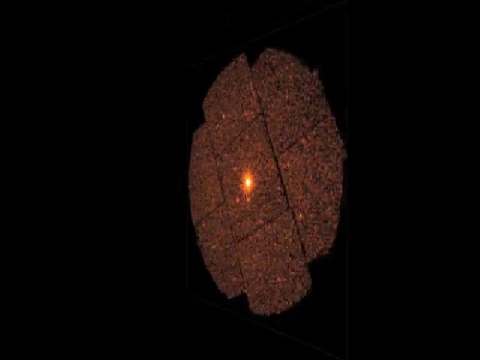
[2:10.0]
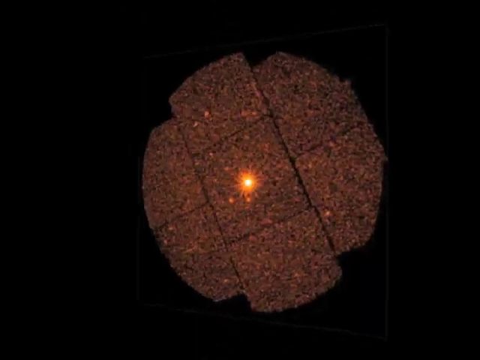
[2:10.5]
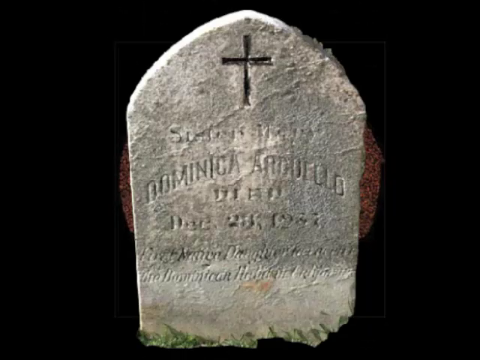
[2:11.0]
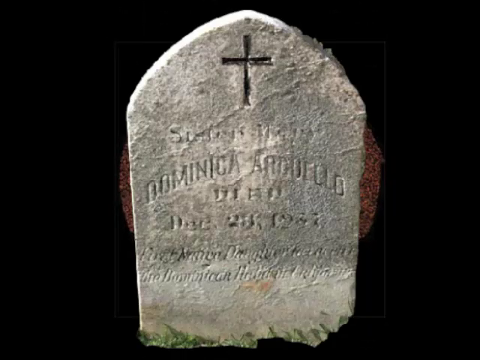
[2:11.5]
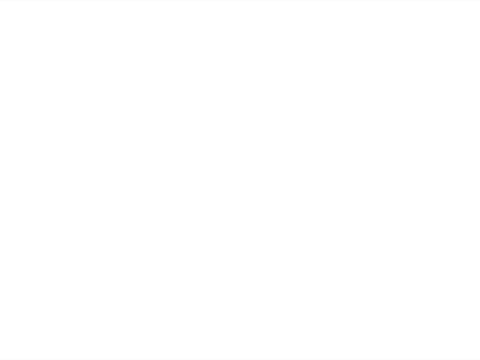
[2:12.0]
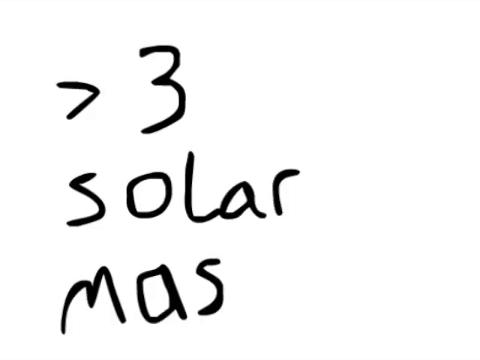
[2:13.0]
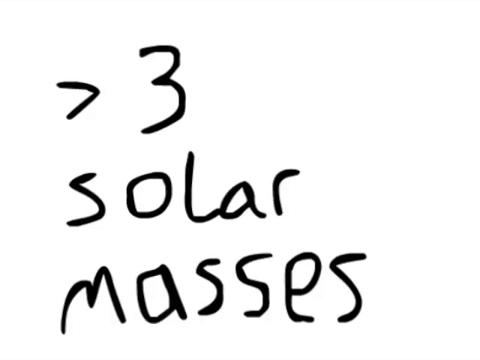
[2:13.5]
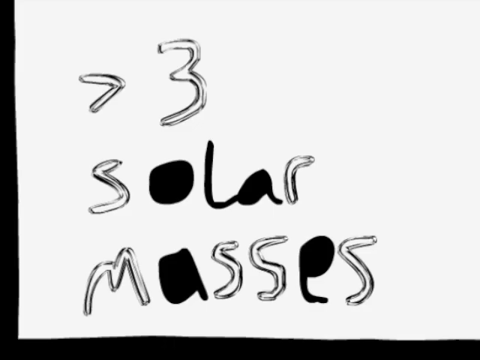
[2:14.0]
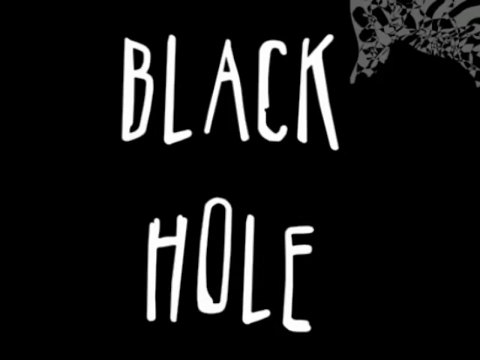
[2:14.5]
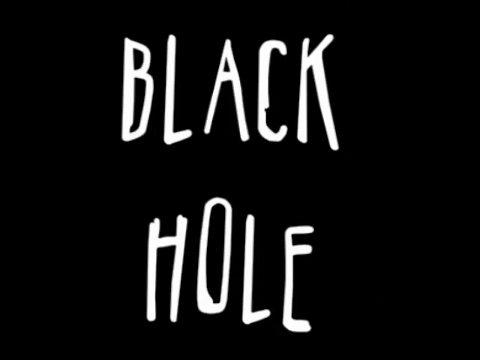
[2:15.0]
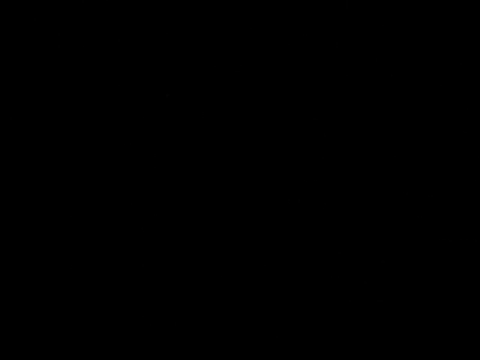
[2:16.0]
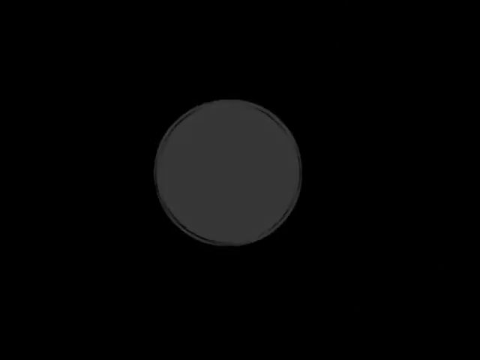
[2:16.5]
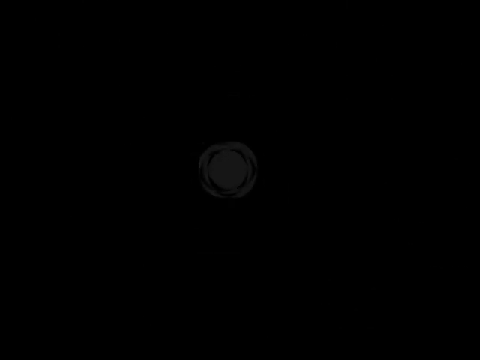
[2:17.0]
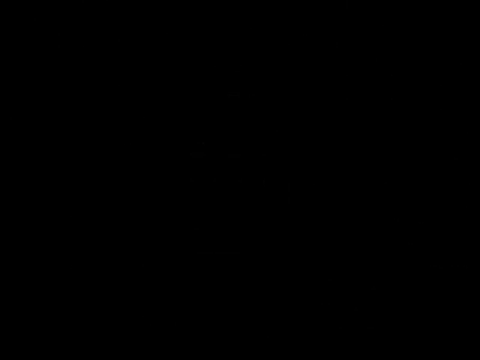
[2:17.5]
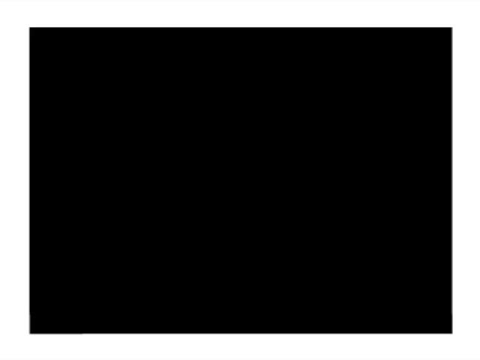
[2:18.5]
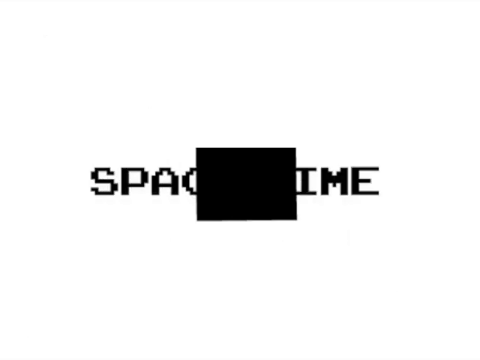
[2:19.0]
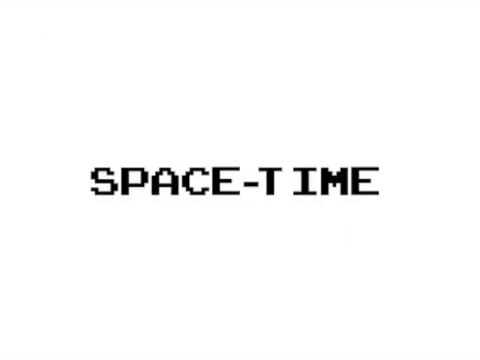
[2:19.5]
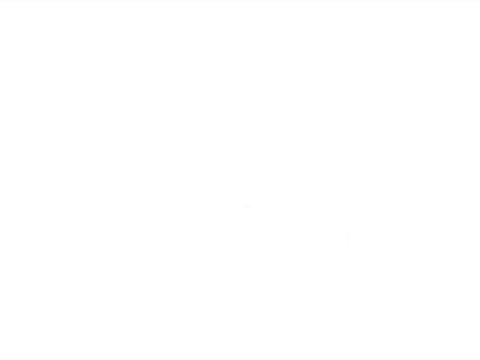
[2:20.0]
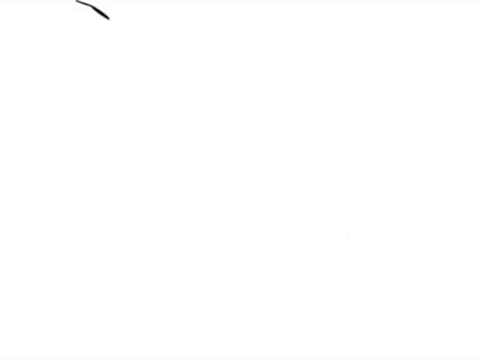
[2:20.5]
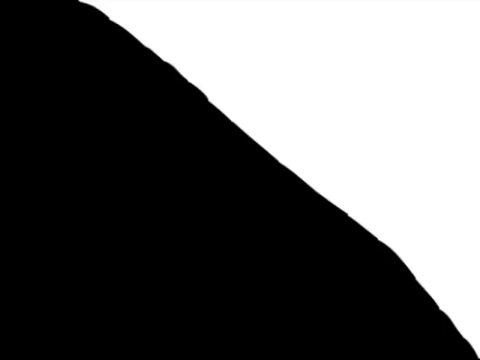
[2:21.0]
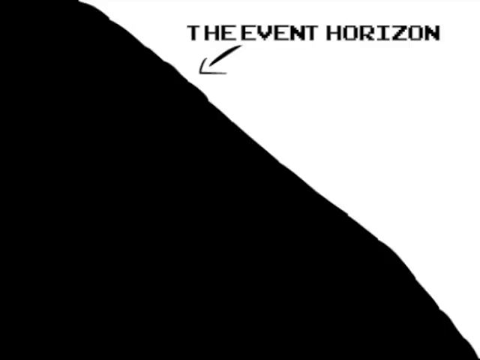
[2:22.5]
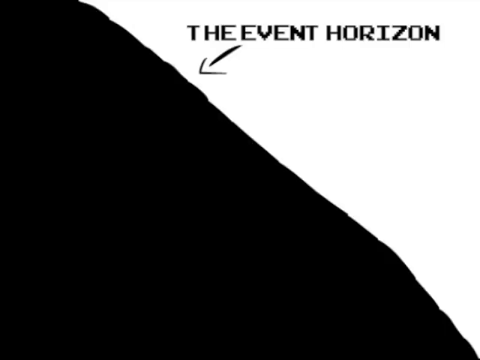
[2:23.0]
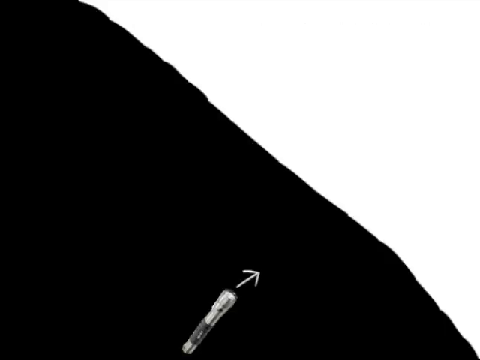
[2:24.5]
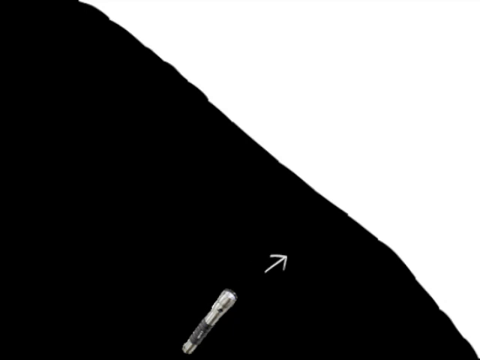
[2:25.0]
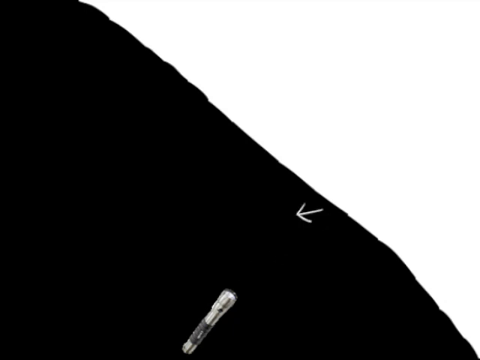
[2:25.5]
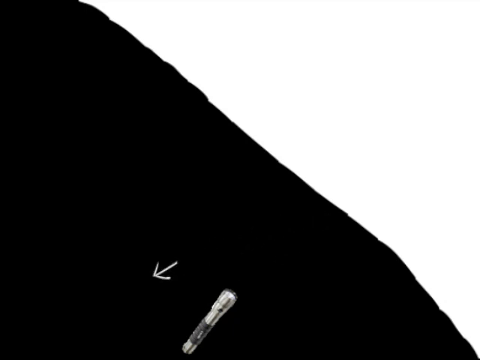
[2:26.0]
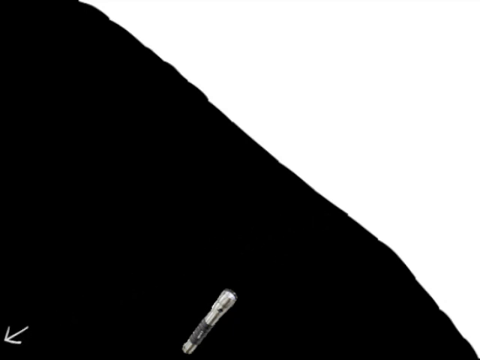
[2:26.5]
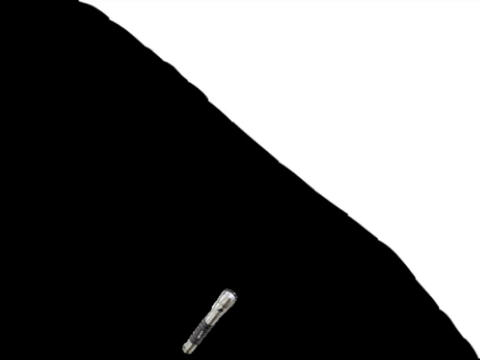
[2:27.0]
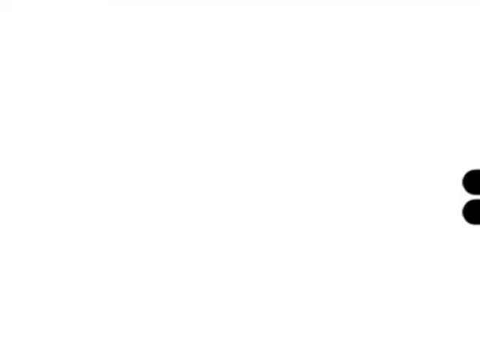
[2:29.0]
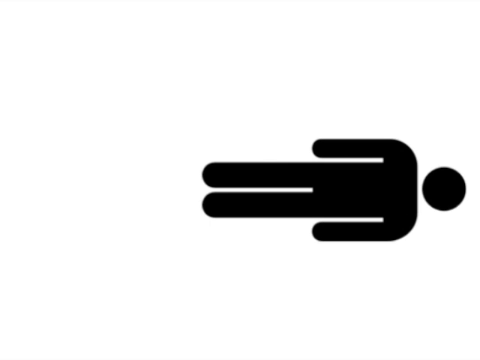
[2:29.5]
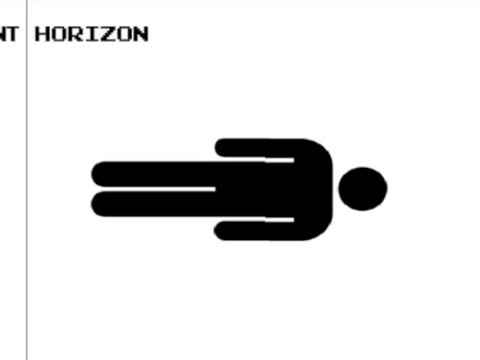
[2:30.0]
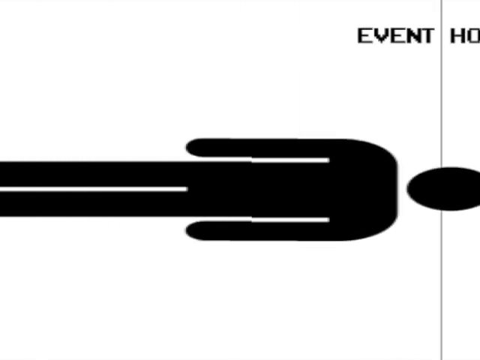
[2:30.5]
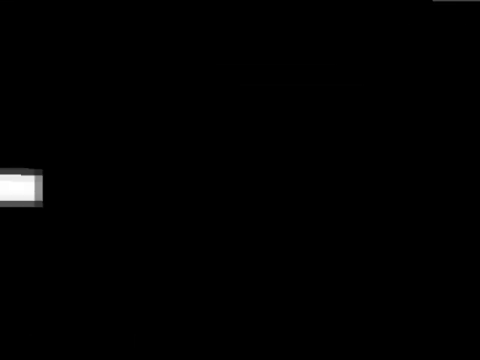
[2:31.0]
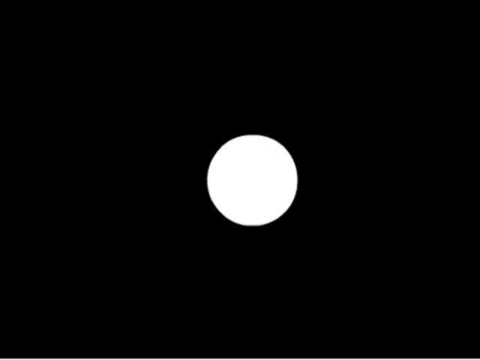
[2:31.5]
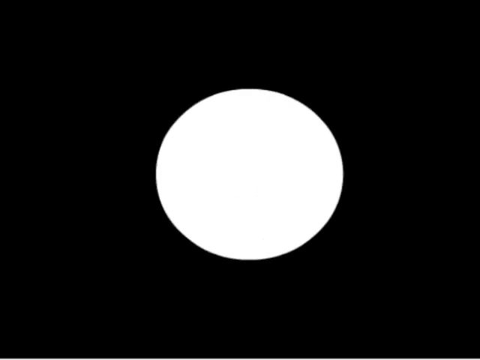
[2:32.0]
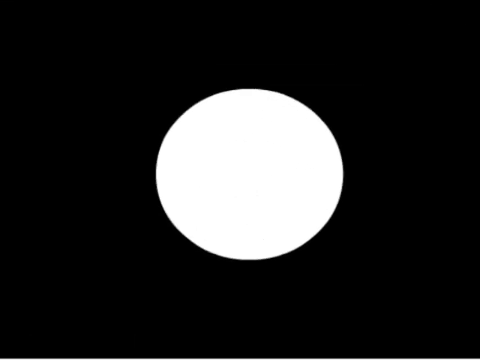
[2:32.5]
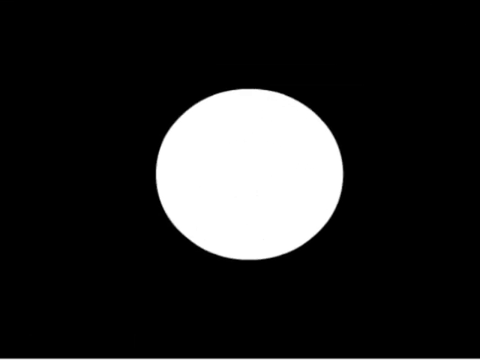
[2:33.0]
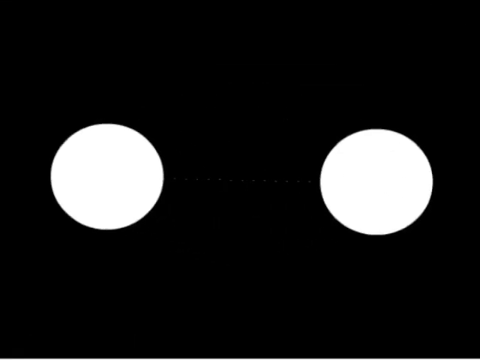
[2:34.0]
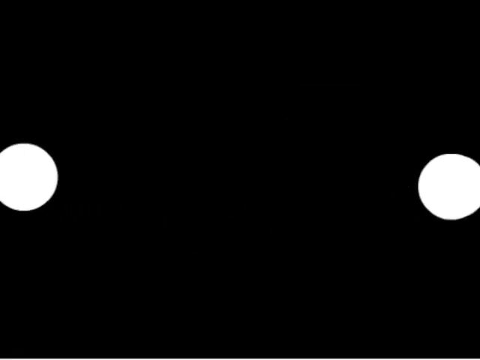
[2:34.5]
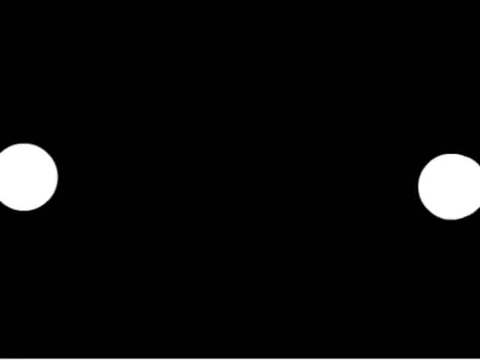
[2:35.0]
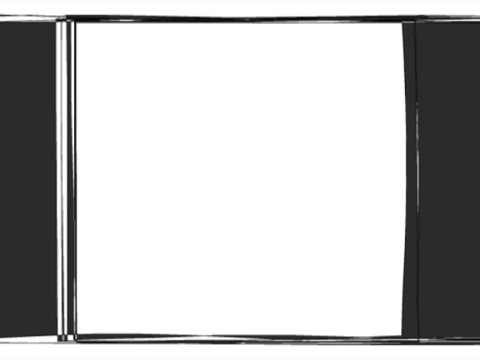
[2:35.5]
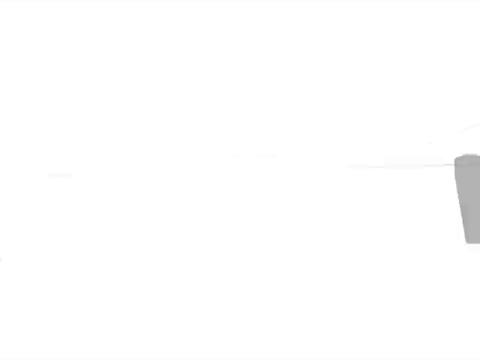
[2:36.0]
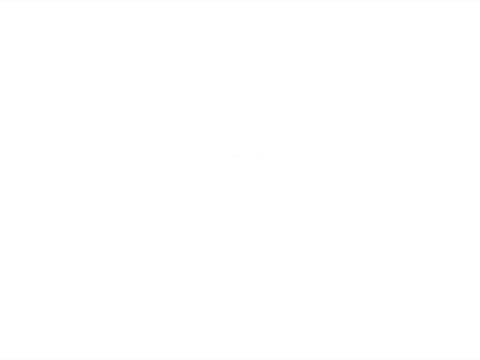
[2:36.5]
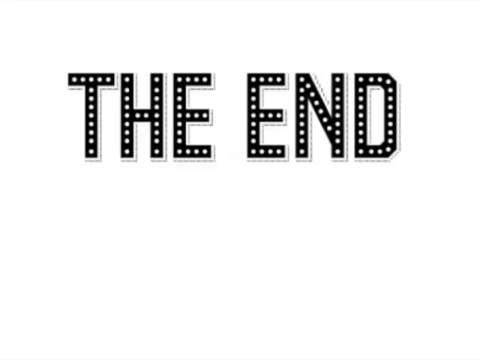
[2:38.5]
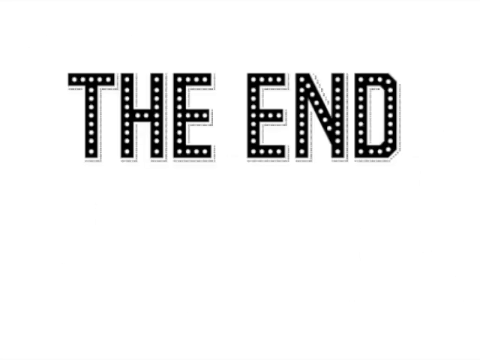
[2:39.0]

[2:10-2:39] Against a black background, an orange-brown object shaped like a flat pumpkin spins, with a circle of light in the middle. A gravestone pops up over it. Text appears with a greater-than symbol and "solar masses." It disappears, and on a black background white text reads "black hole." The words "space" and "time" appear. Then the left half of the image turns black and the right half turns white. In black on the white part, text reads "the event horizon," with an arrow going from the first E in "event" towards the black left side. Another arrow goes from the lower left side around. A white circle splits into two white circles, and then text says "the end."